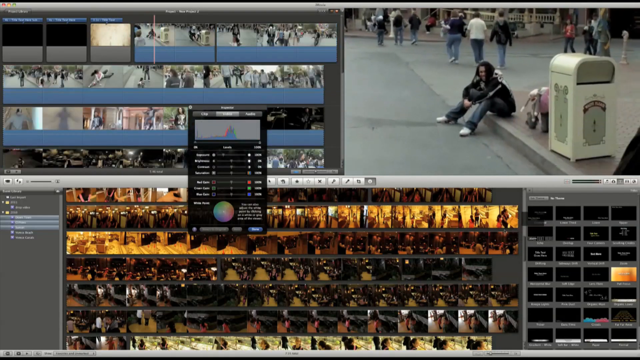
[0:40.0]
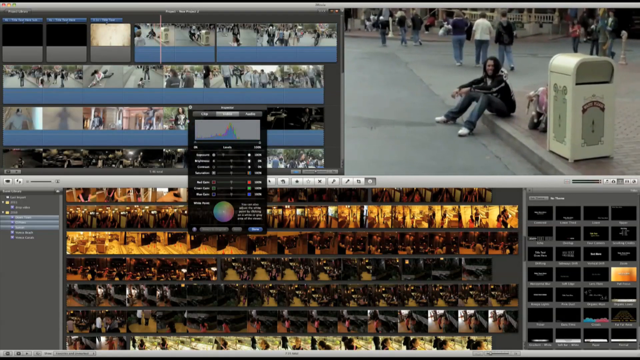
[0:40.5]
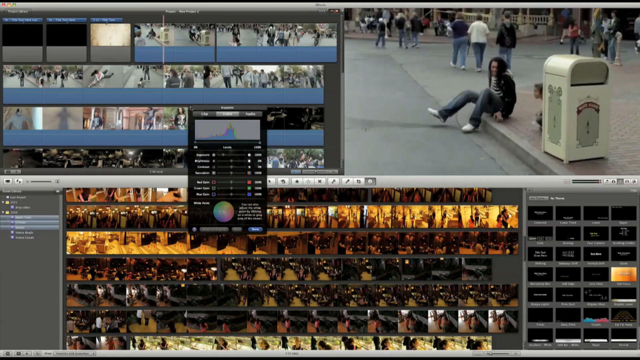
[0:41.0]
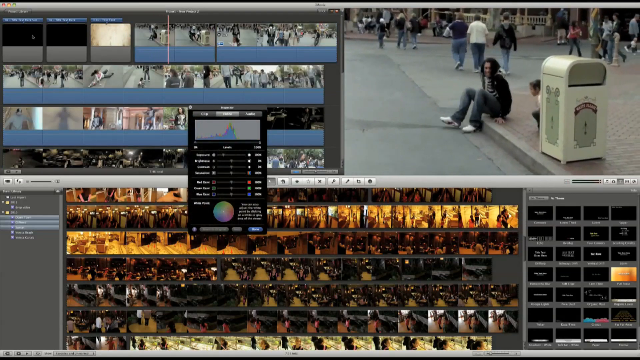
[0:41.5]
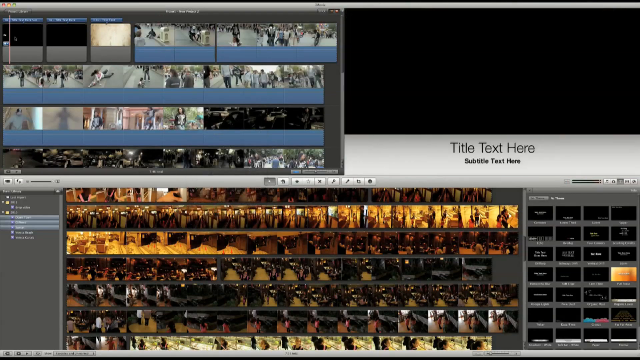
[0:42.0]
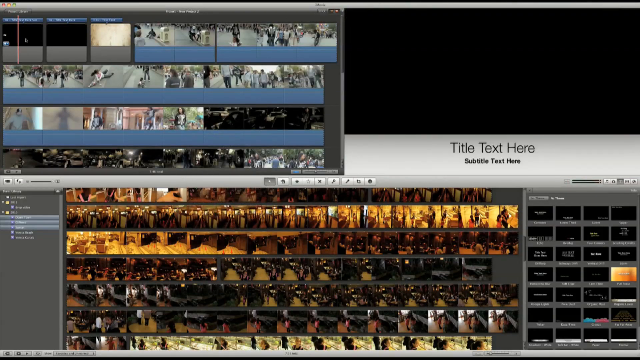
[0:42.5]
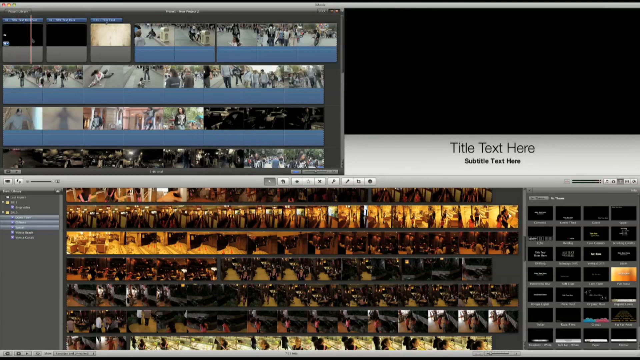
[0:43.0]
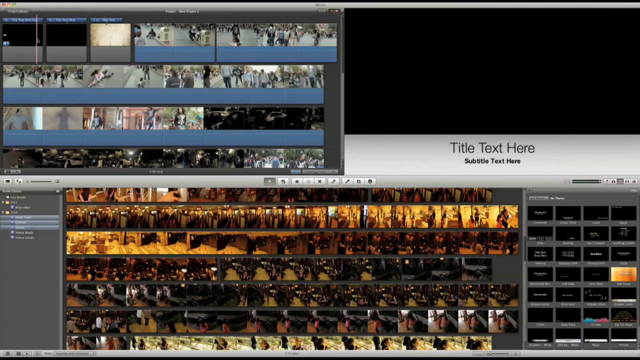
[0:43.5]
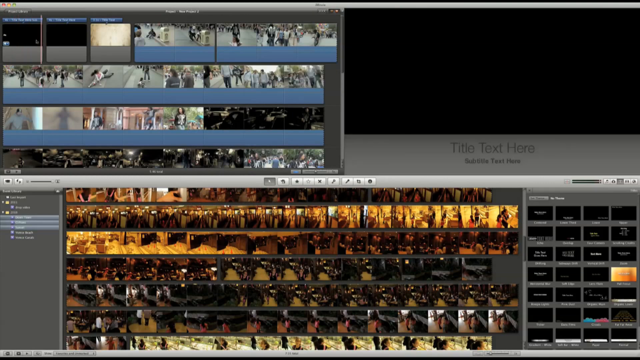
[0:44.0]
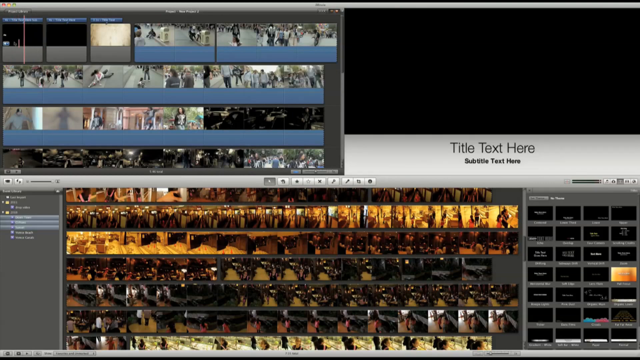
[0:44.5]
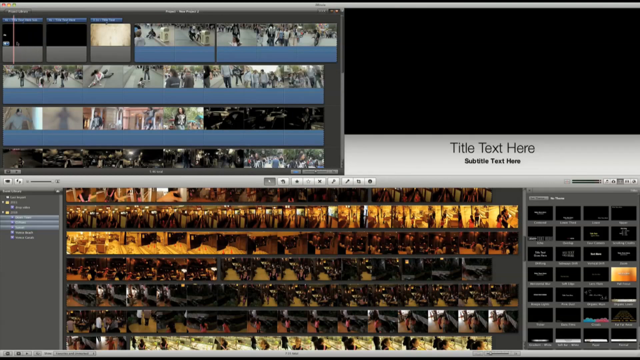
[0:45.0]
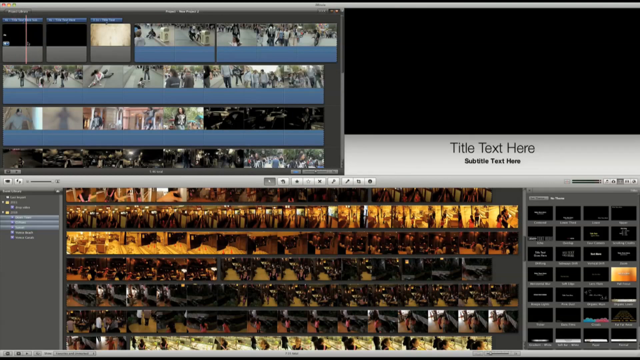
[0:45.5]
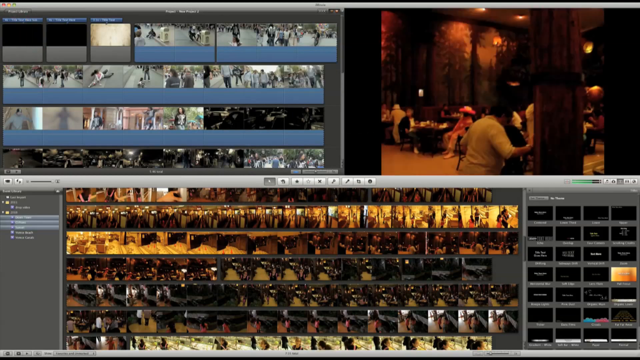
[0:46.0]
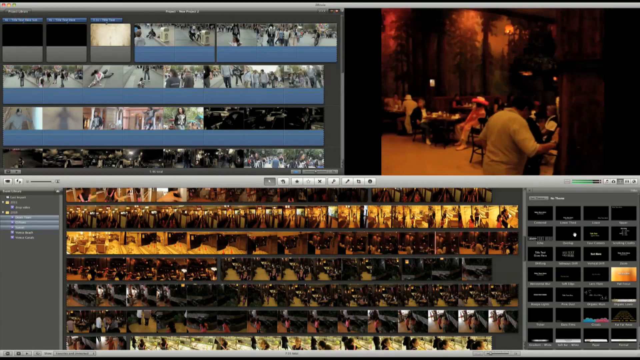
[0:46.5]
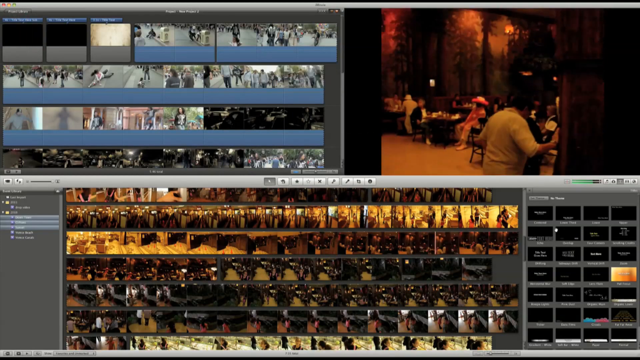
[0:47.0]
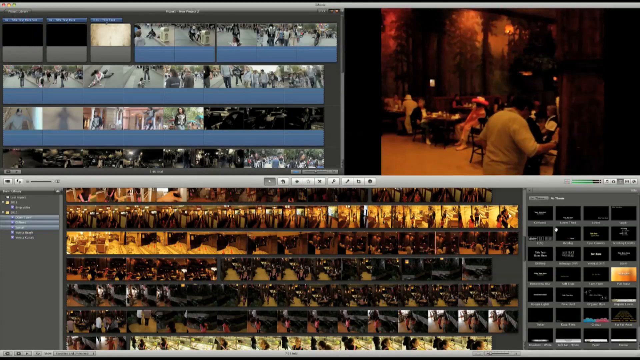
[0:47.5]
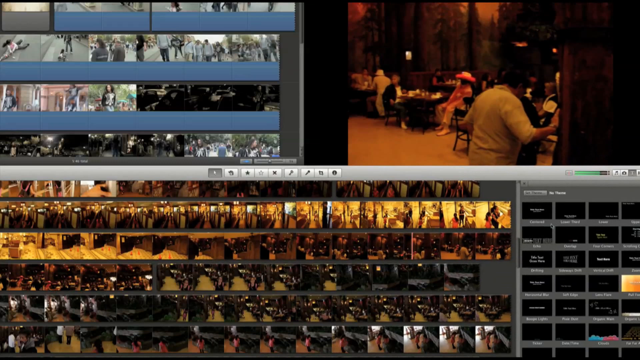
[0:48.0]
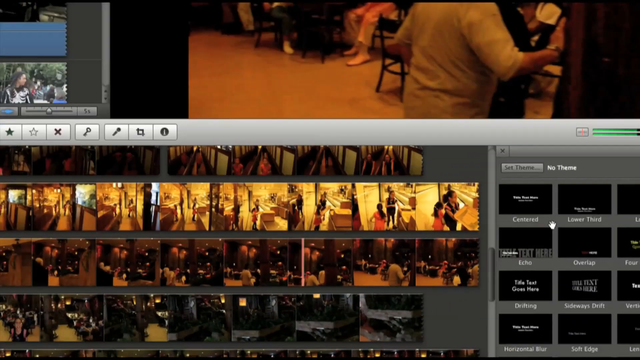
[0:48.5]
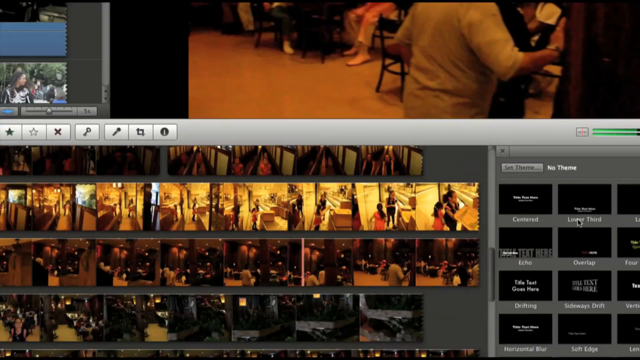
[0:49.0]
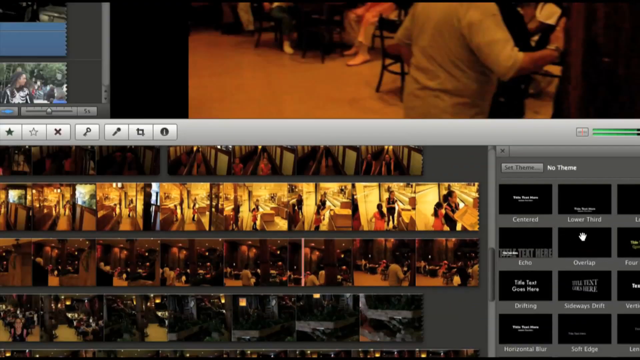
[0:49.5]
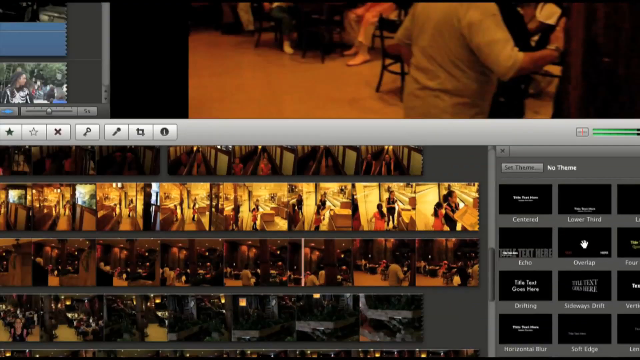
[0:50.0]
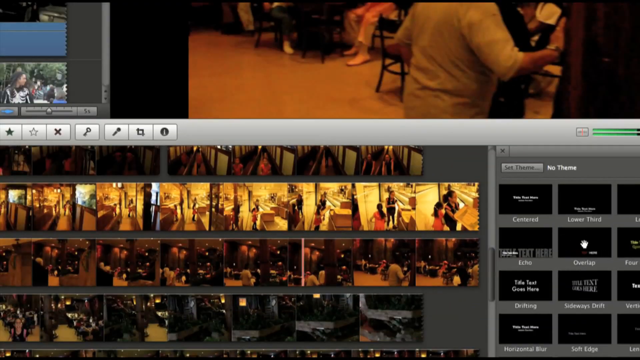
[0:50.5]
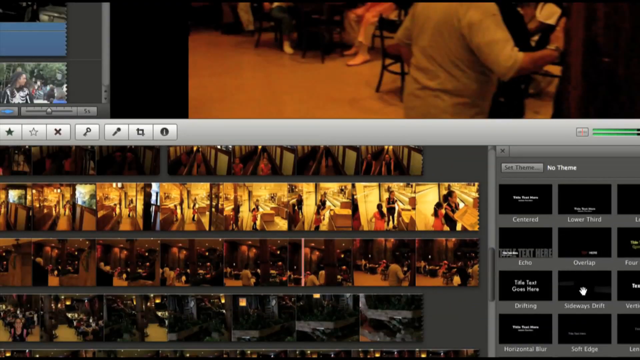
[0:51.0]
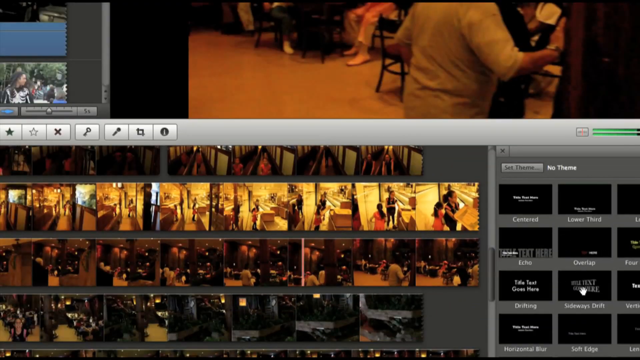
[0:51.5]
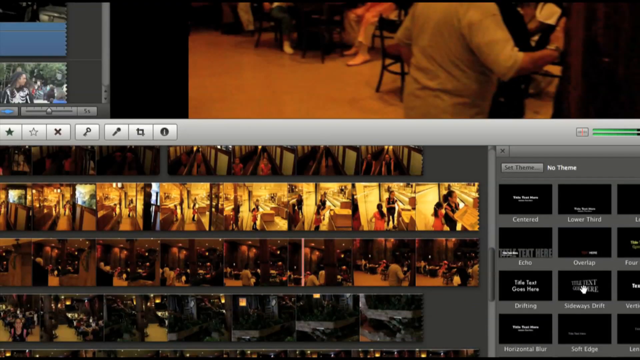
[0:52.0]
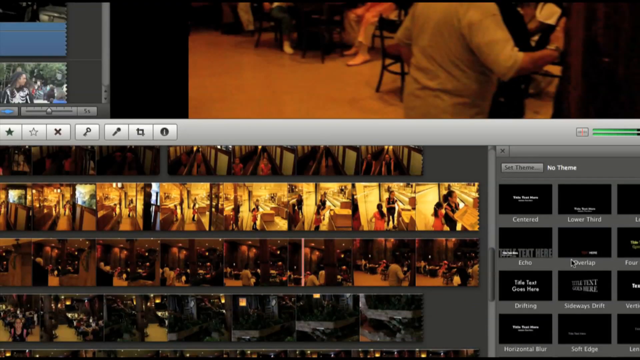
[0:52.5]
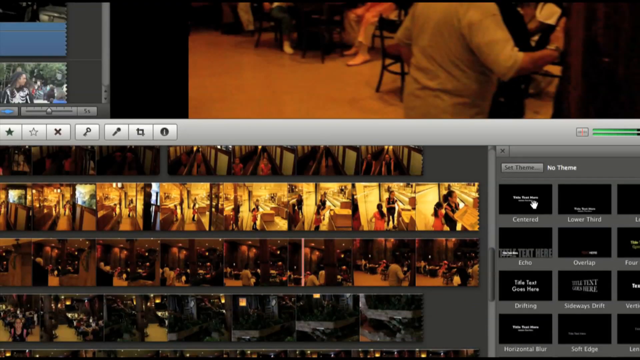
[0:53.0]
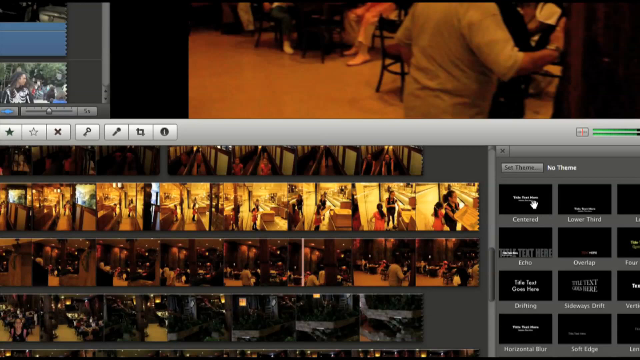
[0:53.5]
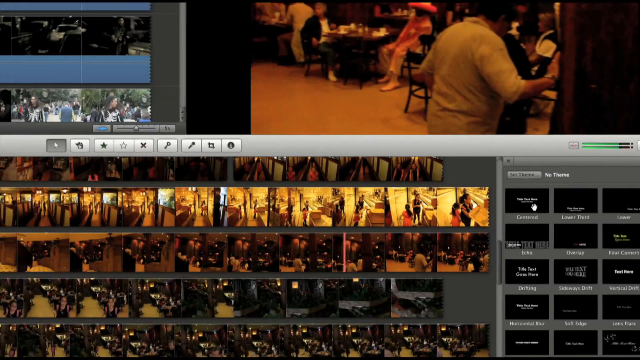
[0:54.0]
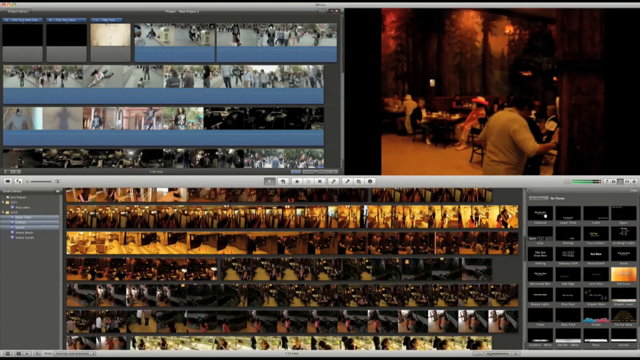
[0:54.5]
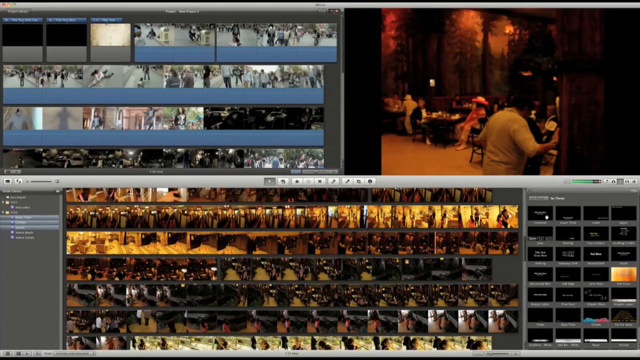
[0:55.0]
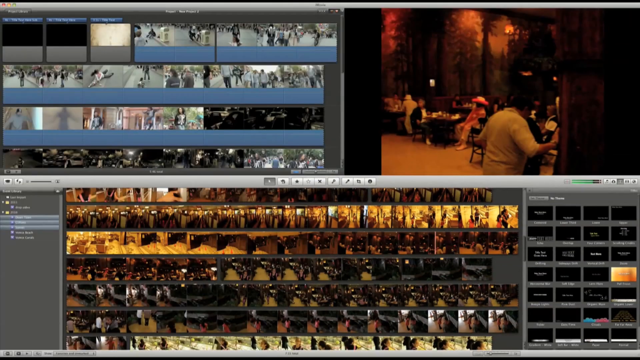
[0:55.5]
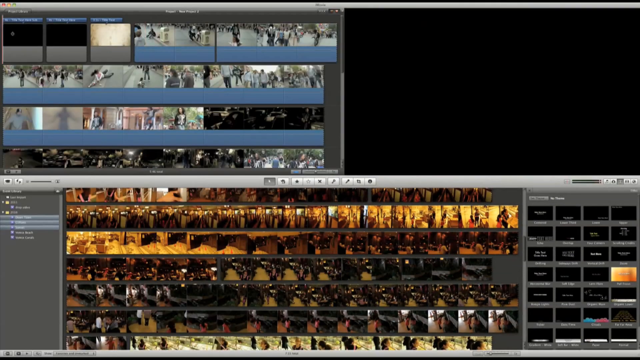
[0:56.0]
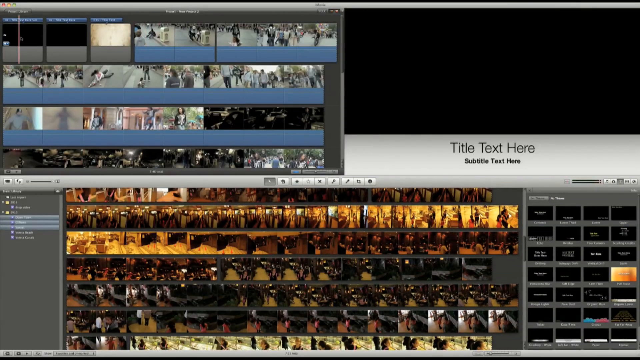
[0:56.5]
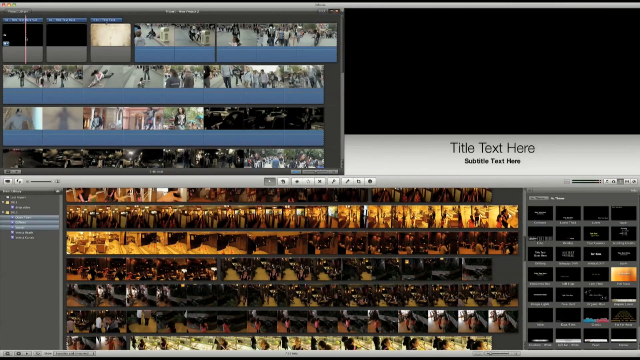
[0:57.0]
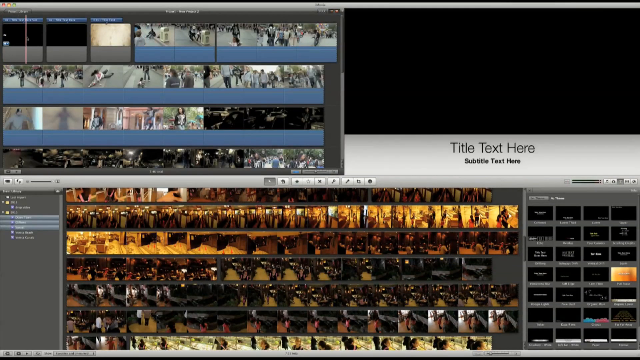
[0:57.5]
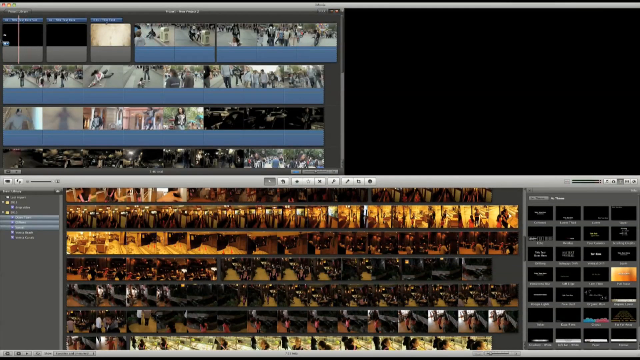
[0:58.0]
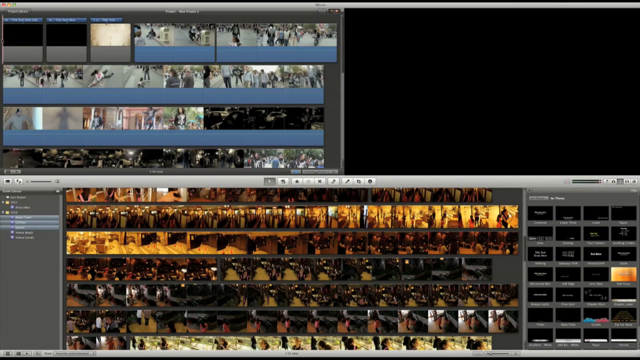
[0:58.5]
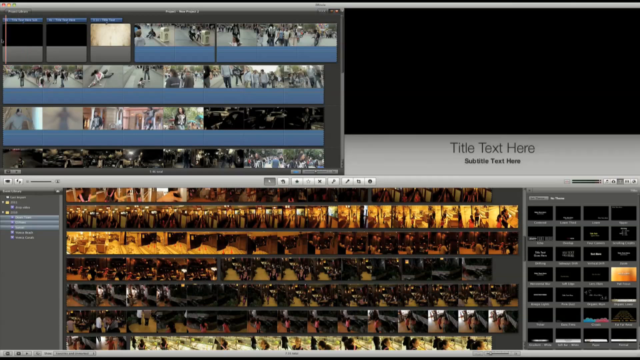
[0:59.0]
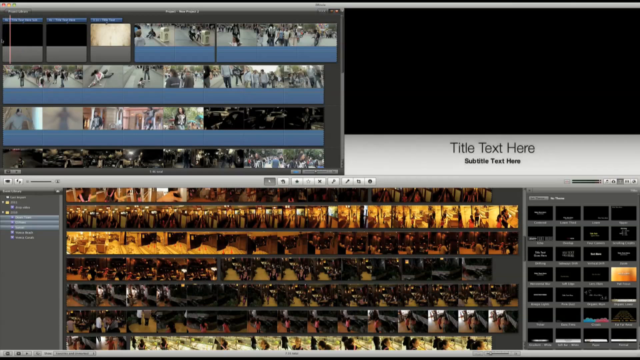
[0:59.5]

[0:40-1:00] A scene shows two teenagers, an older one and a younger one, sitting on the pavement. To the left of one of them are a box and some bags. That teenager wears a black T-shirt, black trousers and white shoes. People walk past the teenagers, and others can be seen in the background. The scenes change, and boxes reading "add text here" are available for subtitles. Another scene shows people sitting on chairs, probably in a hotel. The hotel scene is shown at the bottom, the outdoor scene at the top left, and the preview in the top right corner. Black boxes for editing the video are in the bottom right corner.